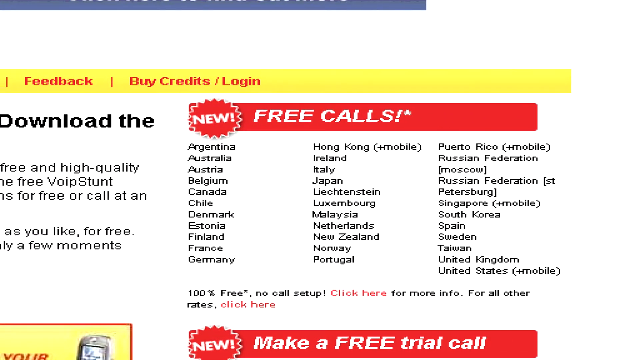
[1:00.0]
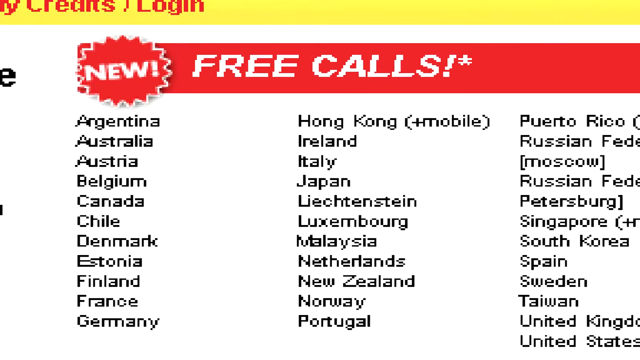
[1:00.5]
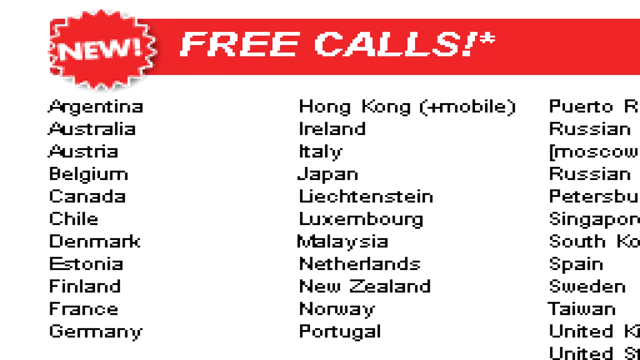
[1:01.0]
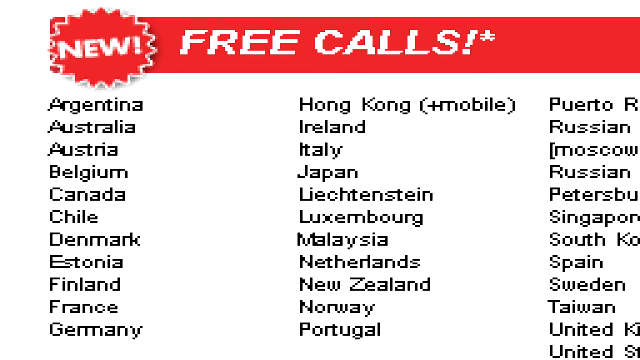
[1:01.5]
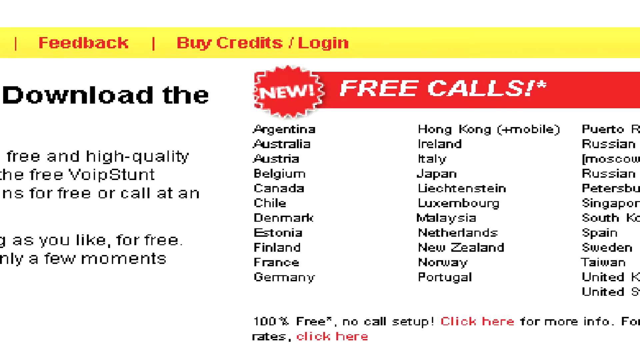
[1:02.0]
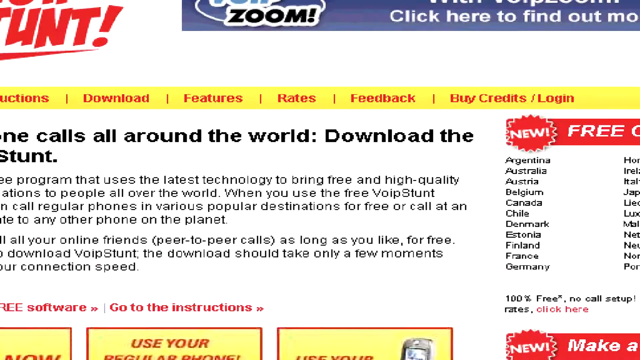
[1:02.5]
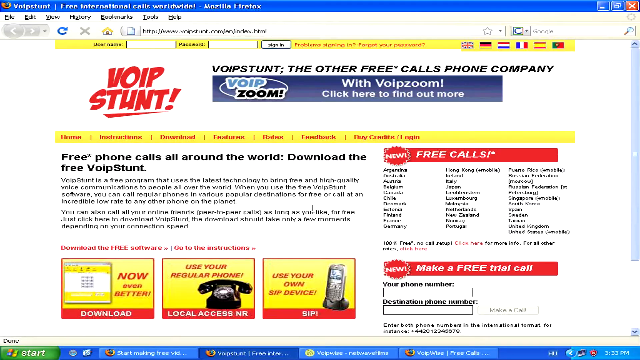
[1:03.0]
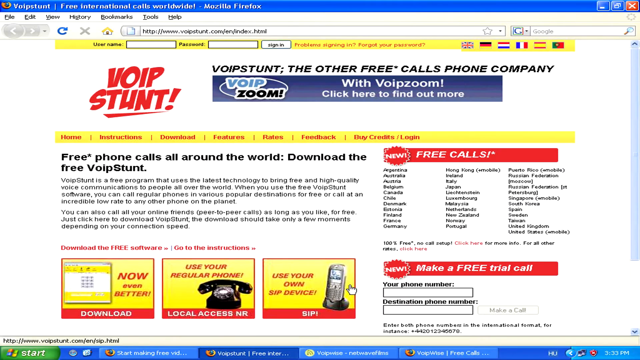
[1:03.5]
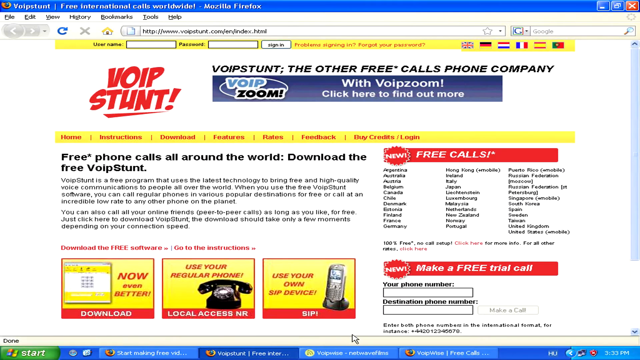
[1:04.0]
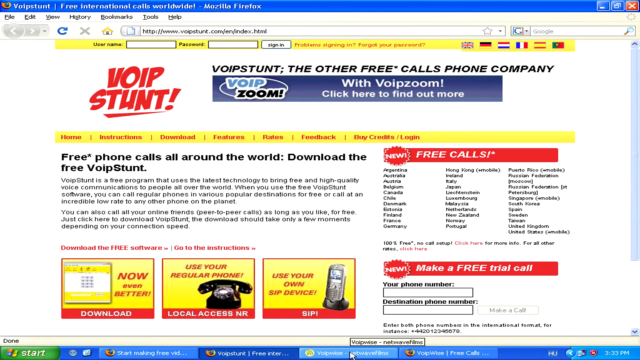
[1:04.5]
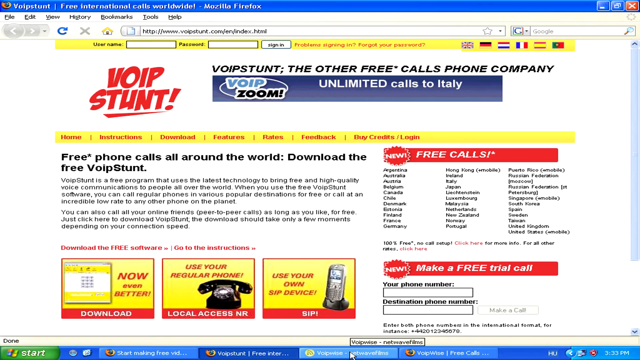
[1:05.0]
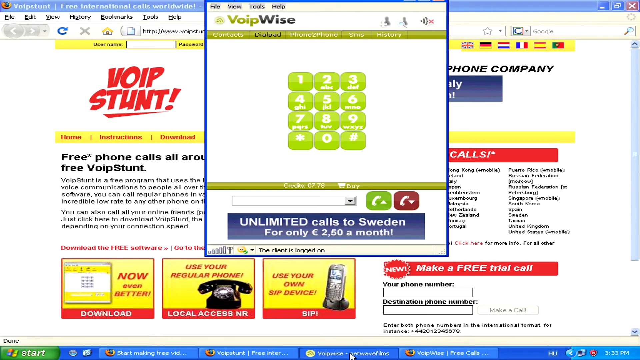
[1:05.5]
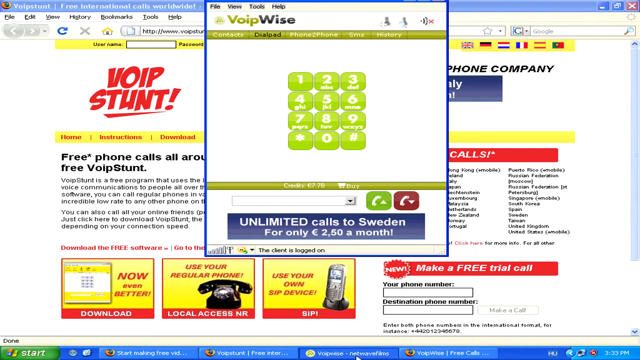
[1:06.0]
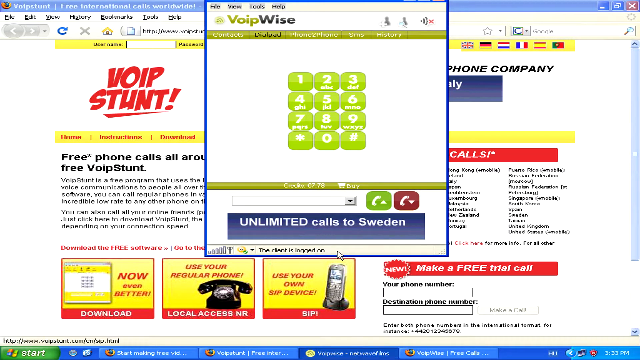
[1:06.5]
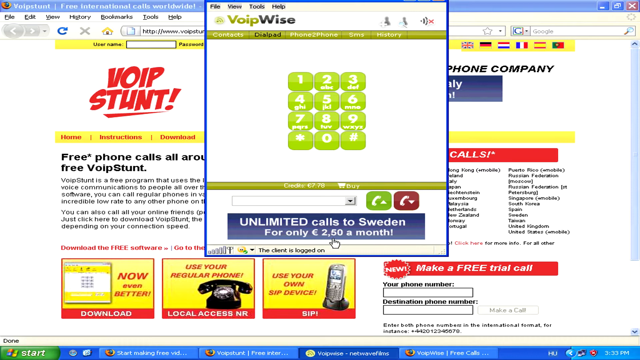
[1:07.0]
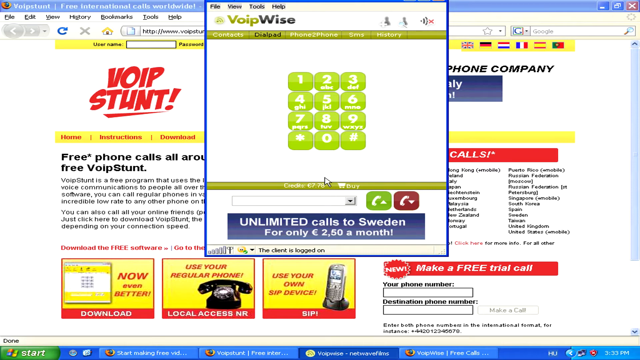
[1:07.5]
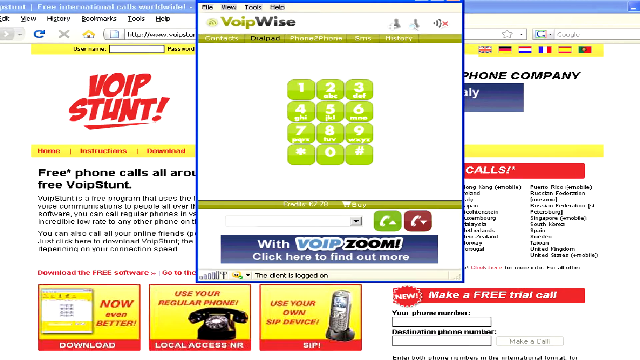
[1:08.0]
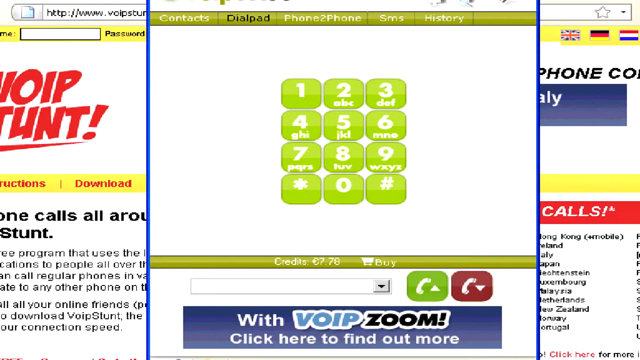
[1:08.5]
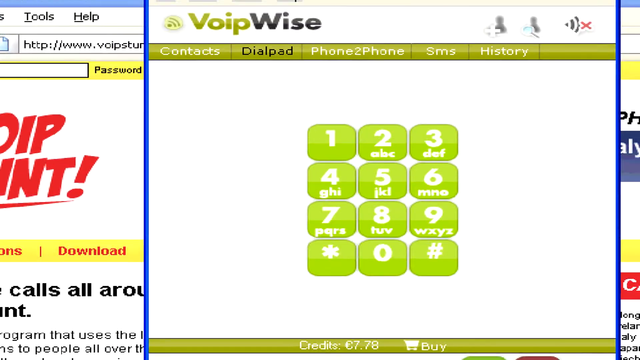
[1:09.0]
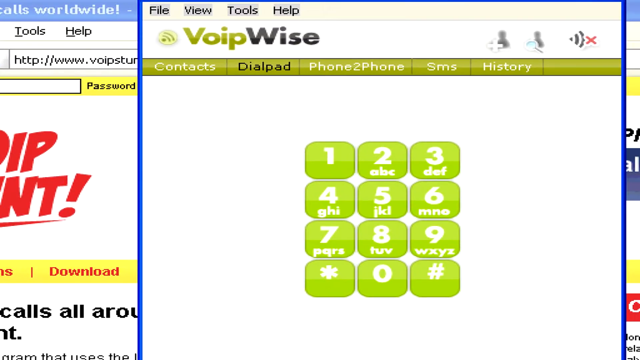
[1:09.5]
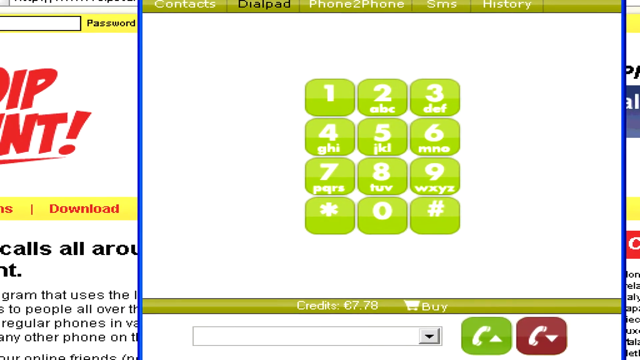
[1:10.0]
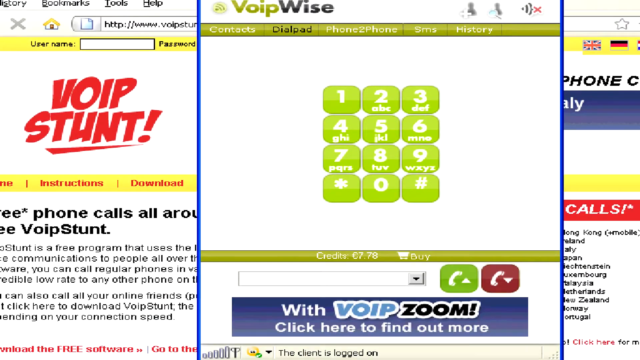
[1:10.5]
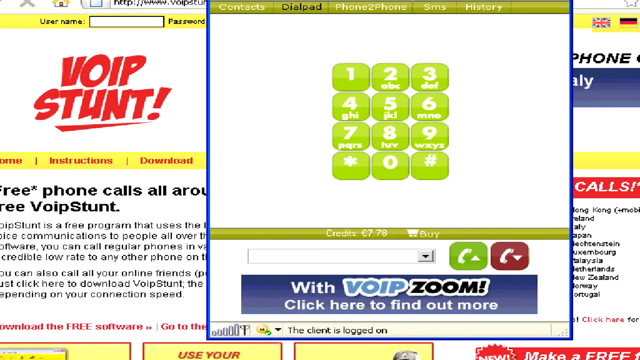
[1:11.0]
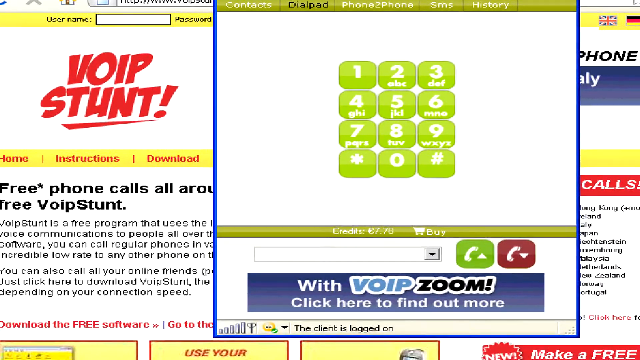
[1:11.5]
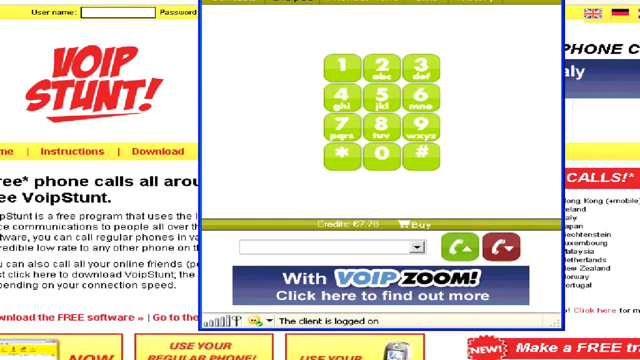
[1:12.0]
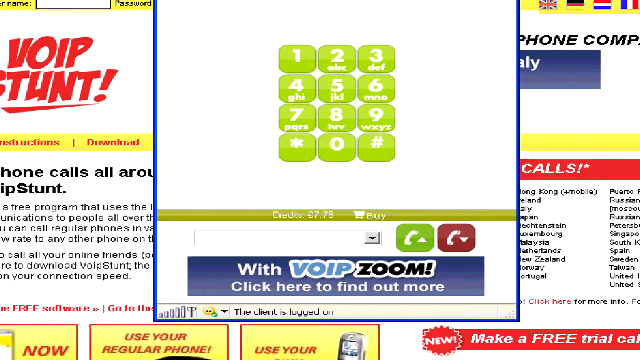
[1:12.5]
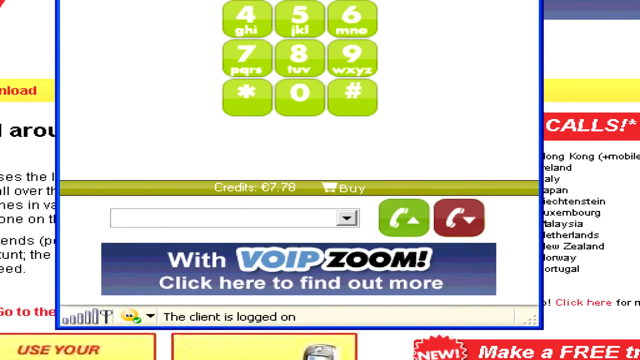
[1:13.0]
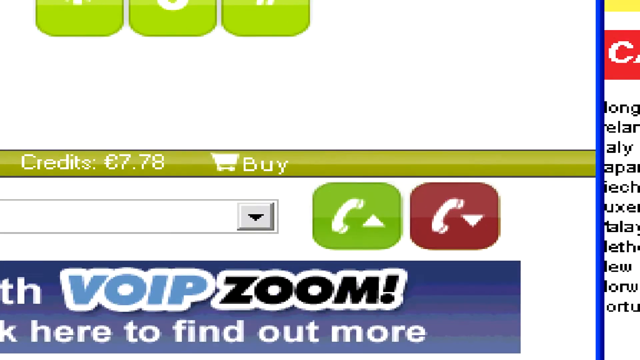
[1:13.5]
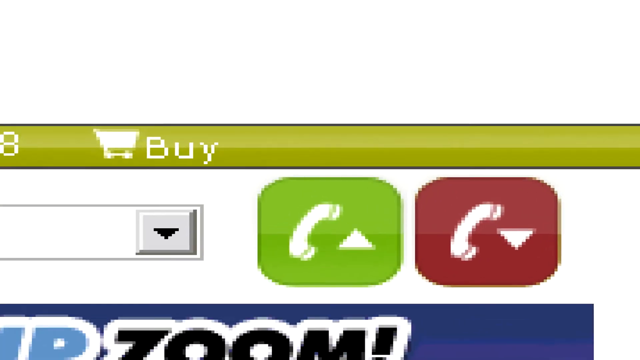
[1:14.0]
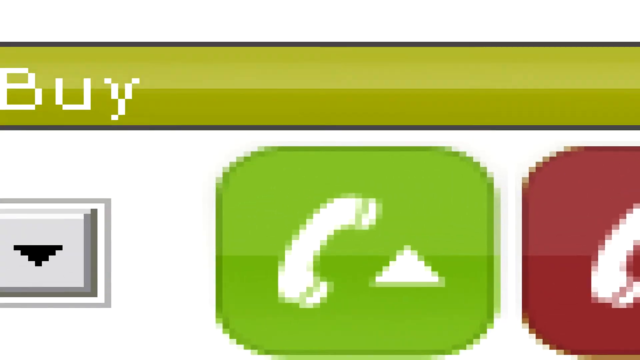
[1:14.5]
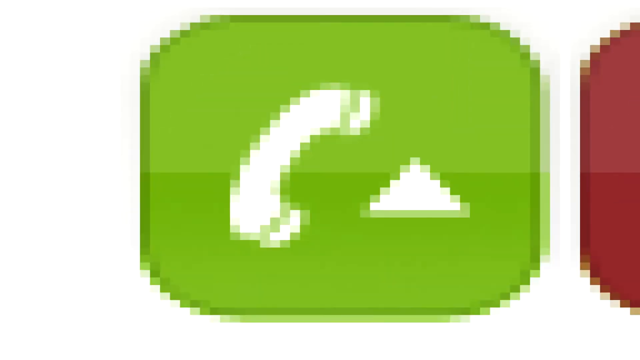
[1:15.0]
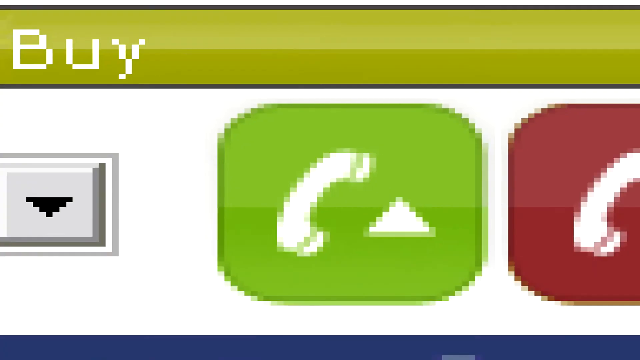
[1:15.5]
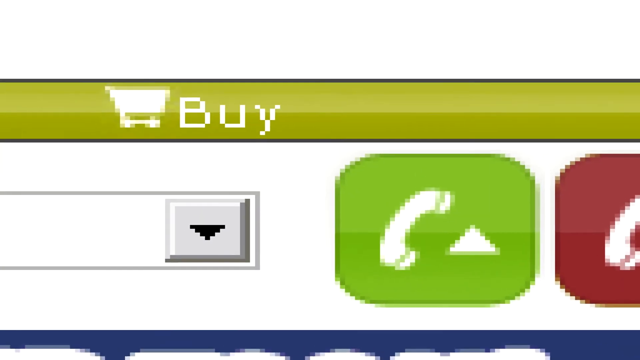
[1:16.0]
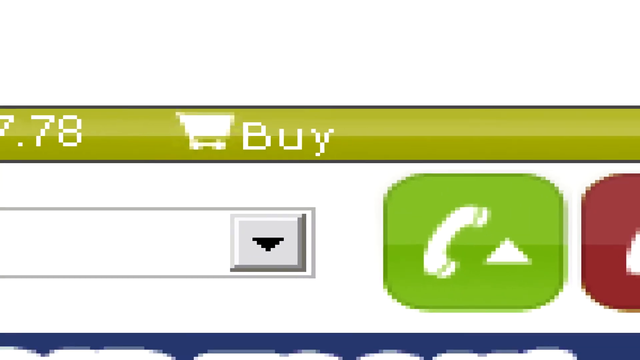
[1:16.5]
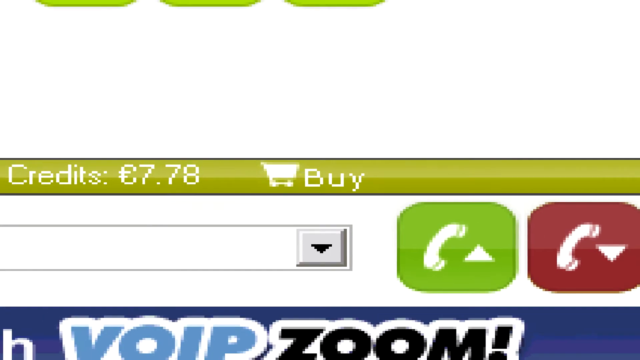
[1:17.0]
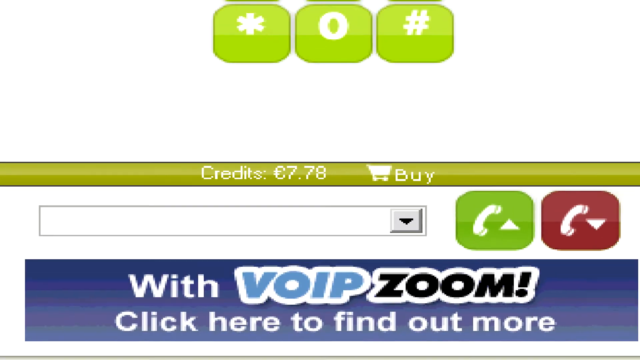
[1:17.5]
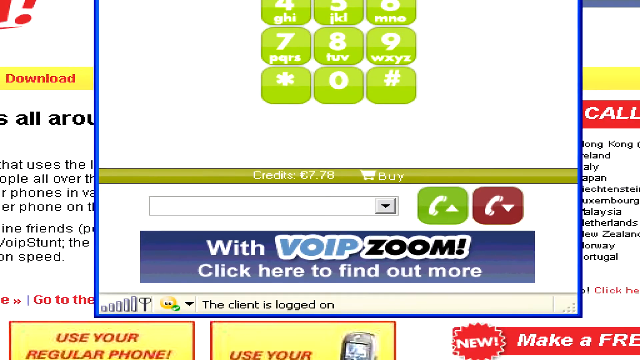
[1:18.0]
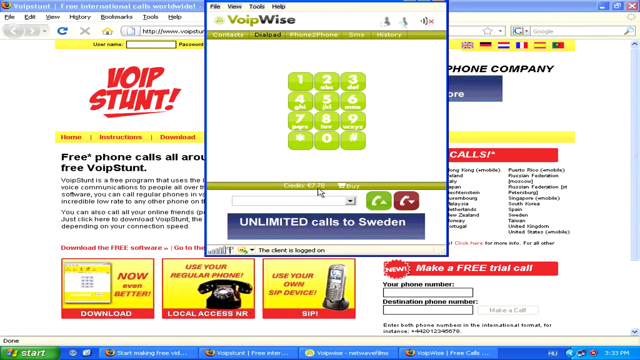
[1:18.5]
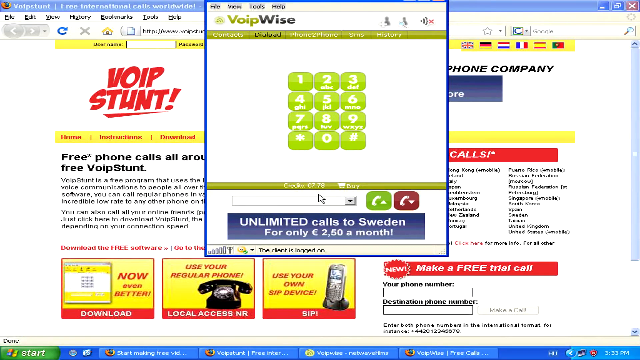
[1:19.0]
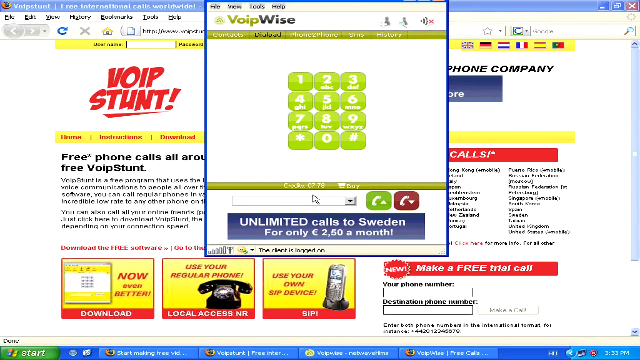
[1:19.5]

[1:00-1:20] The VoIP website is shown, and the view constantly zooms in and out of the software, showing a list of countries. It is unclear which country he selects, but he selects something and dials a number; he apparently has entered a number to dial and call. The VoIP voice application appears to be software on the computer, used to buy credit or add a number and make calls.